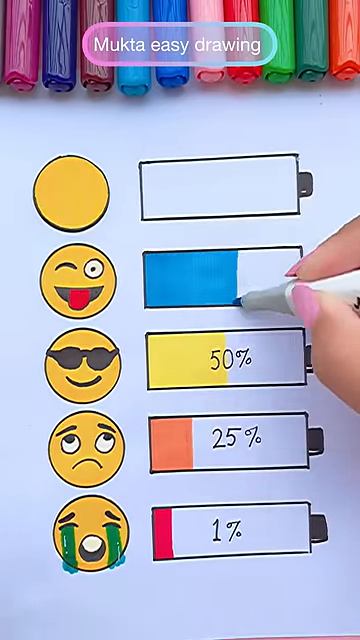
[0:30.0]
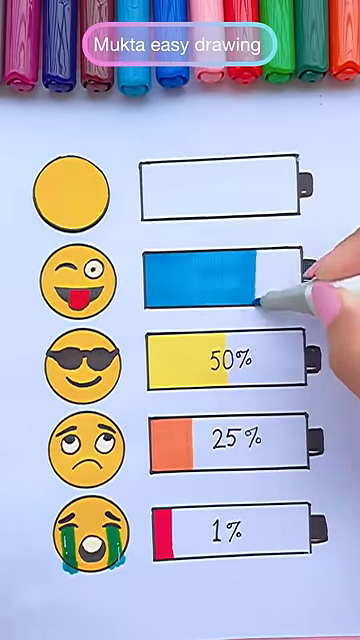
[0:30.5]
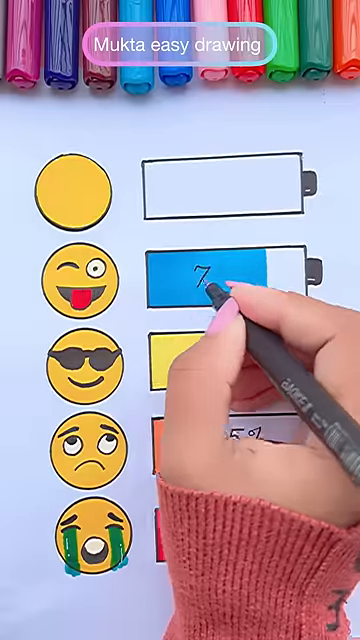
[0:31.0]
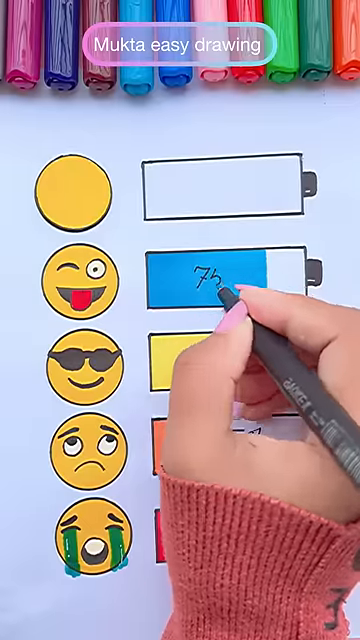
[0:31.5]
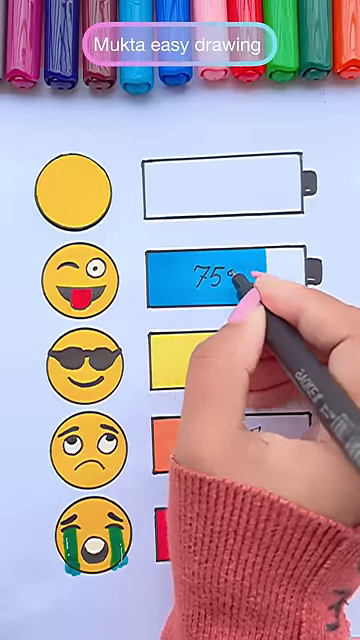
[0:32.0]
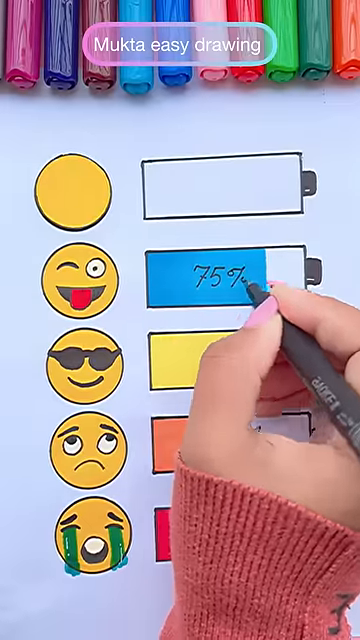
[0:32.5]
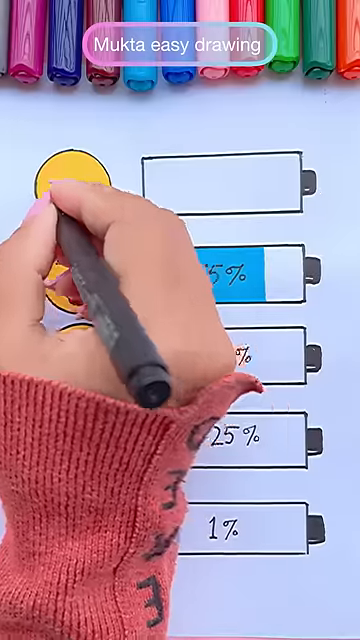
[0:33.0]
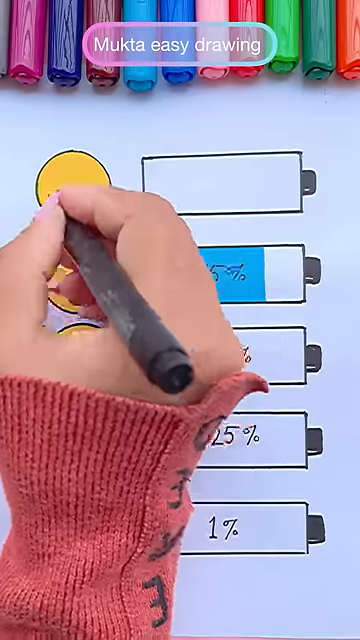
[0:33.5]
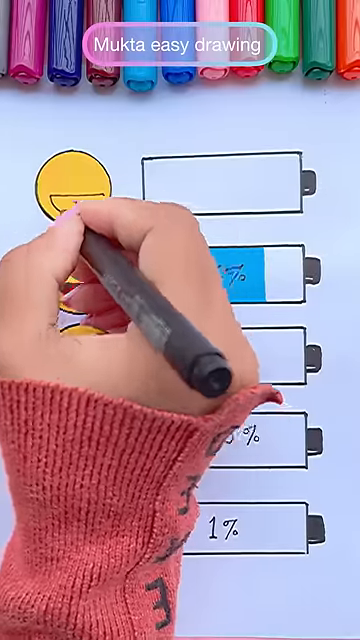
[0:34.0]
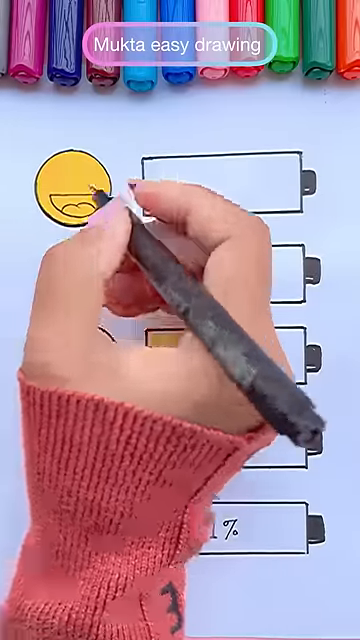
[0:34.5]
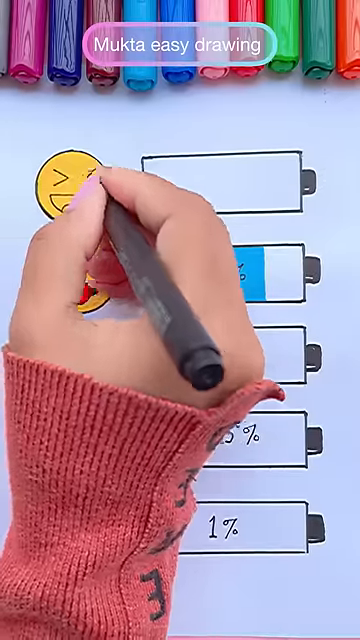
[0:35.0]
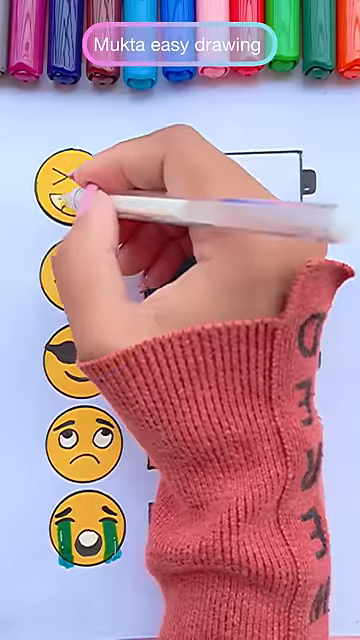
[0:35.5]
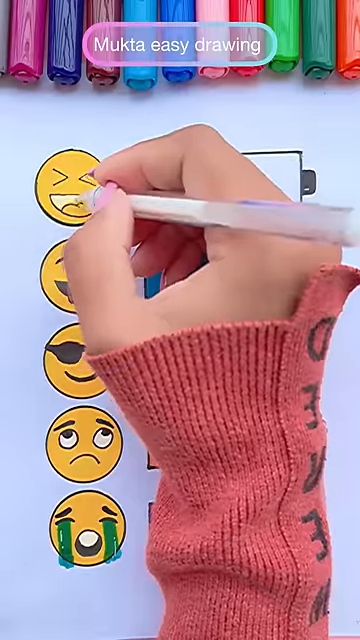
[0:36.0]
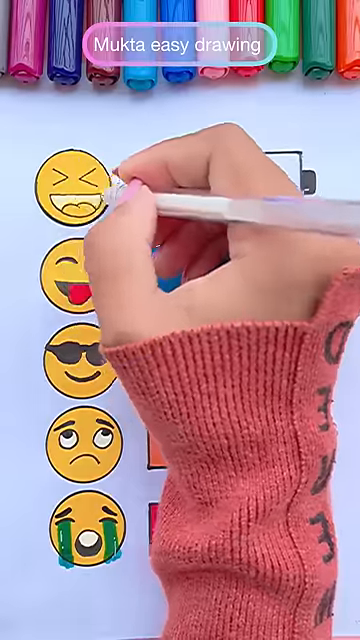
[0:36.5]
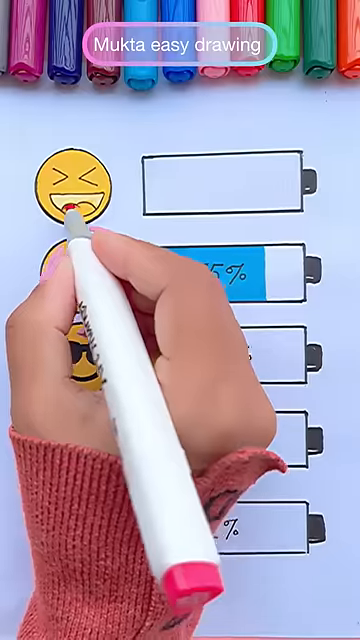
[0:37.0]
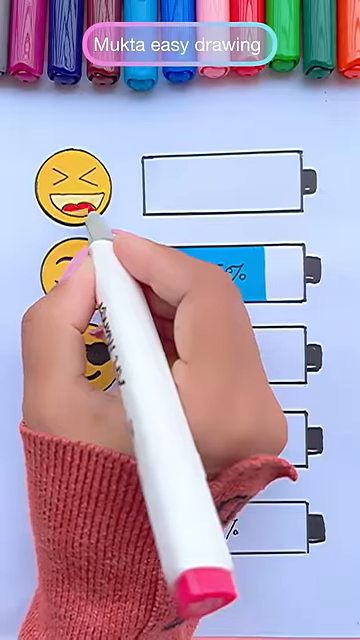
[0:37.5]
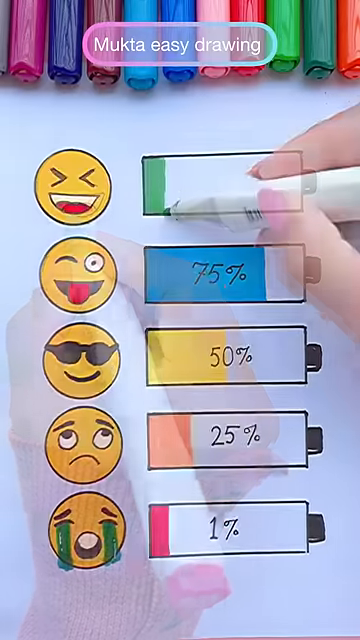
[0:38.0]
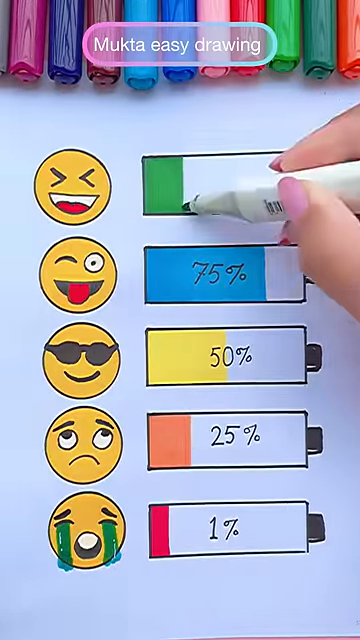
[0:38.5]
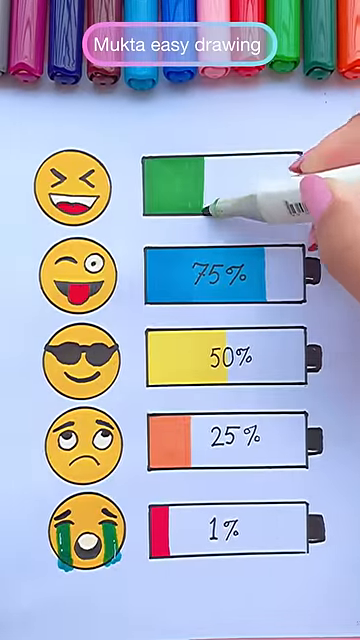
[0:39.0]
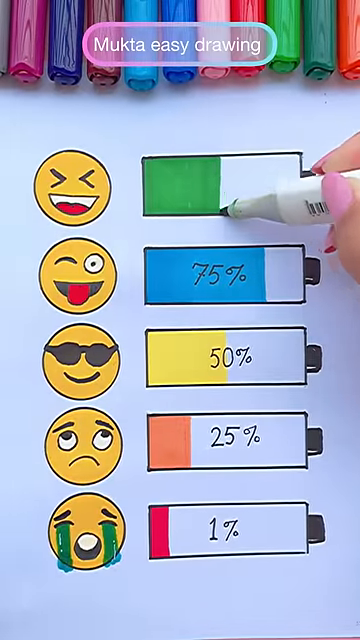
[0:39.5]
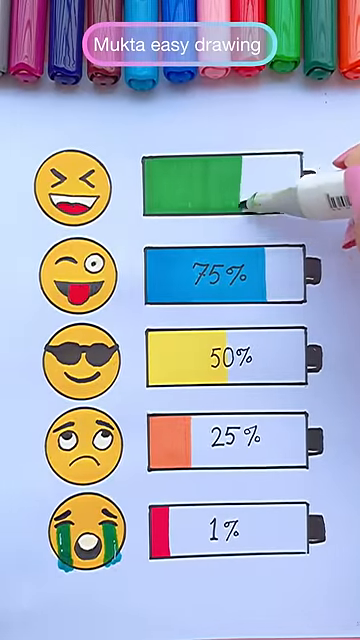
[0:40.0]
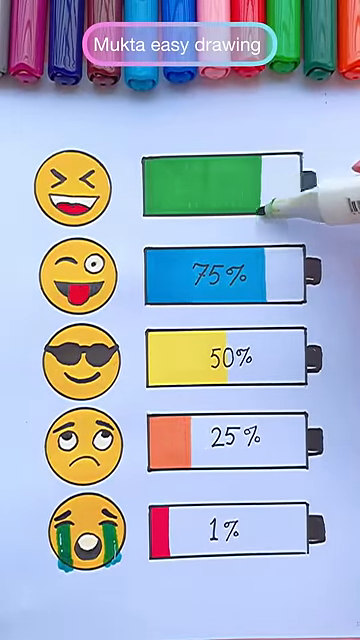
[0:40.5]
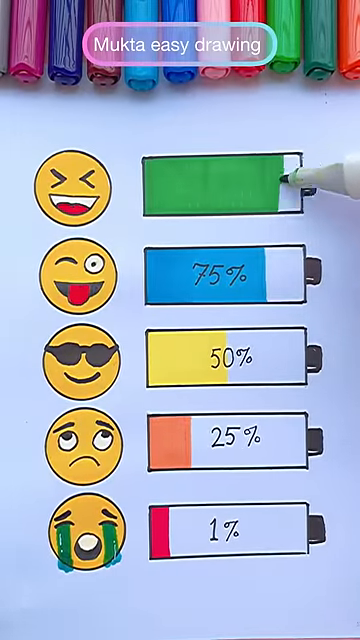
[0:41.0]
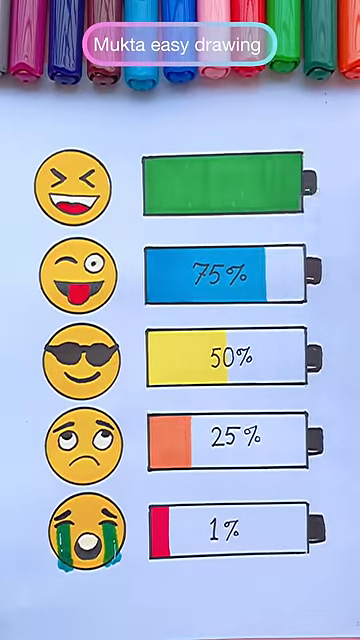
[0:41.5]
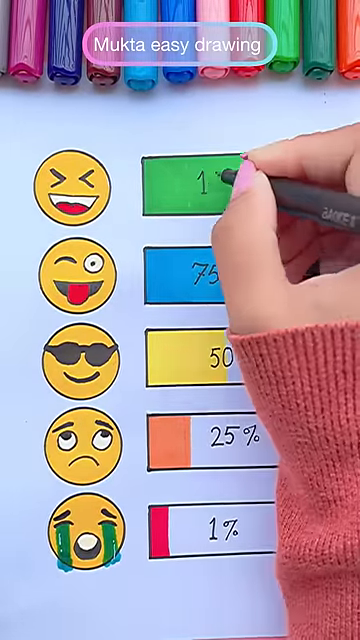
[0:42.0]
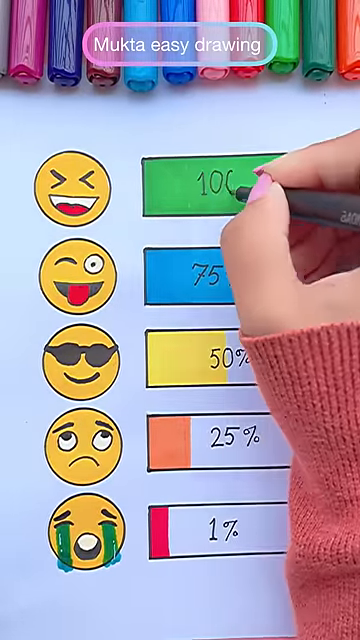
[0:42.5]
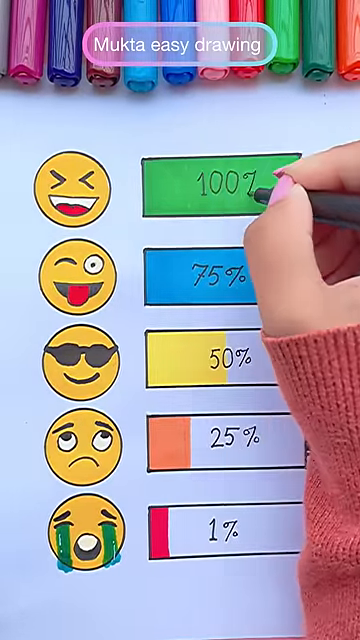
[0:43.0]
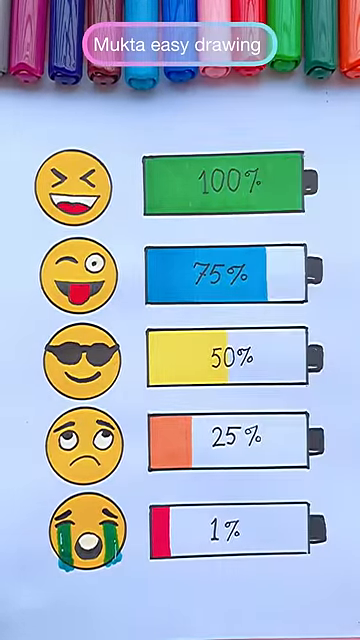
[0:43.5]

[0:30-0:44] A drawing of five batteries is shown. The bottom one is filled in 1% with red, with "1%" drawn on it and a crying emoji to the left. The next one up is filled in 25% with orange, with "25%" written on it and a frowning, eye-rolling emoji. The next is 50% in yellow, with "50%" written on it and an emoji smiling and wearing sunglasses. On the next one up, the hand has drawn a silly emoji with one eye open, one eye closed and its tongue out, has filled in the battery in aqua blue, and has drawn "75%" on it. On the last battery, at the top, the hand fills it in completely in green, writes "100%", and draws an emoji with squinting eyes and an open-mouthed smile. The hand appears to belong to a woman with pink painted fingernails and the cuff of a reddish sweater that looks like it has some writing on it.